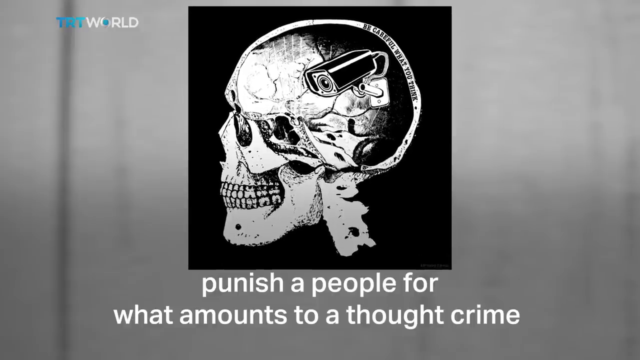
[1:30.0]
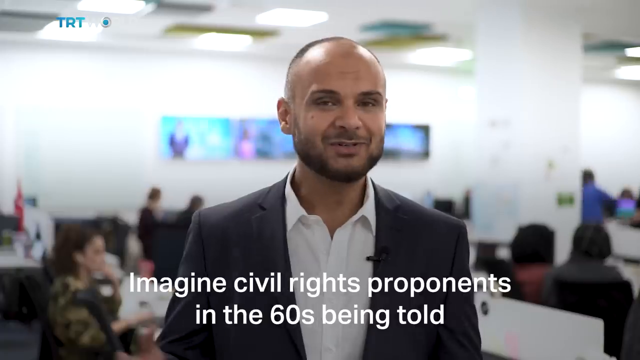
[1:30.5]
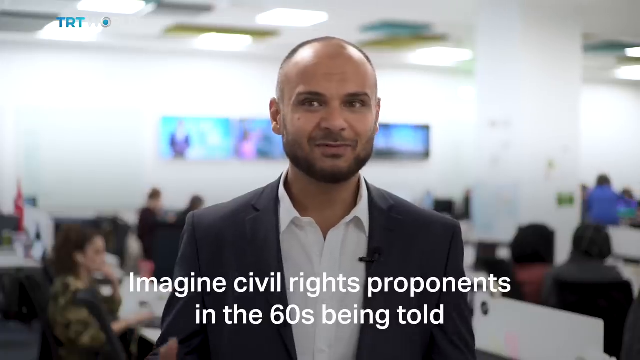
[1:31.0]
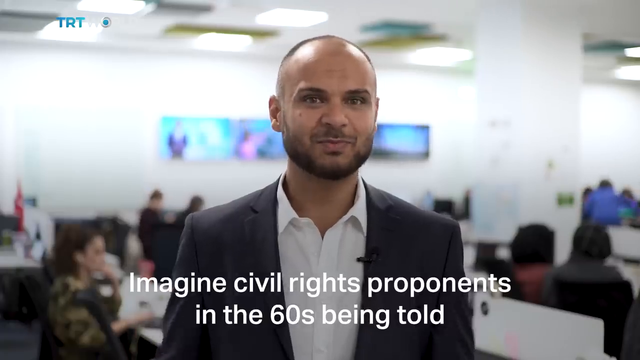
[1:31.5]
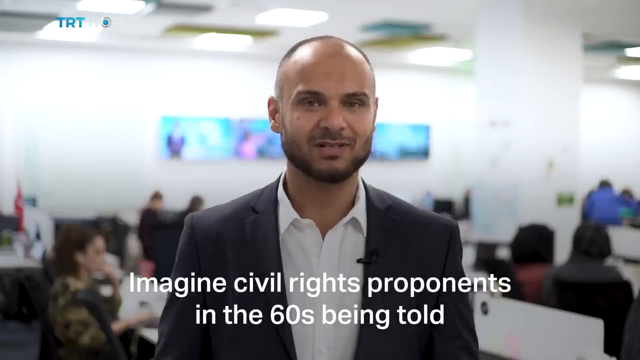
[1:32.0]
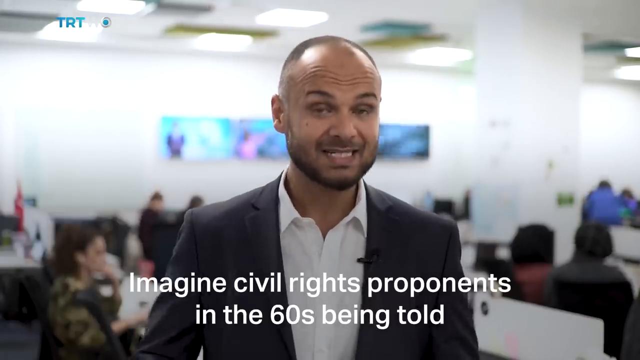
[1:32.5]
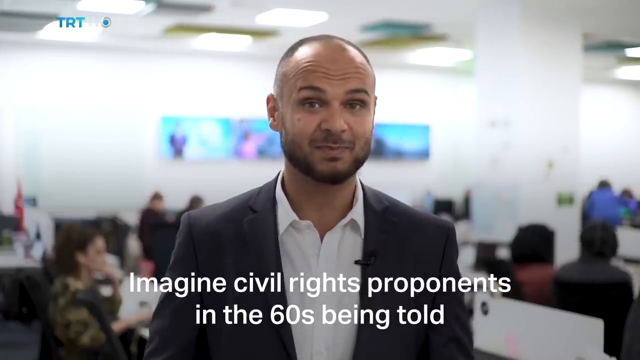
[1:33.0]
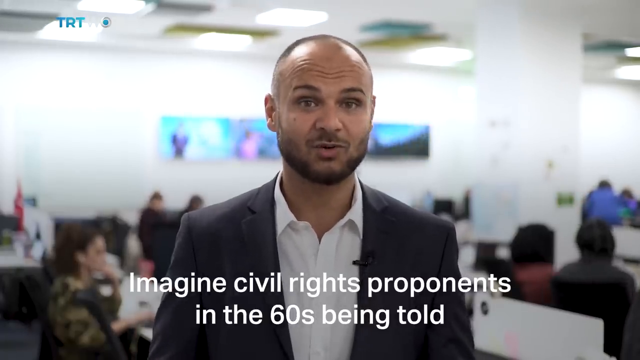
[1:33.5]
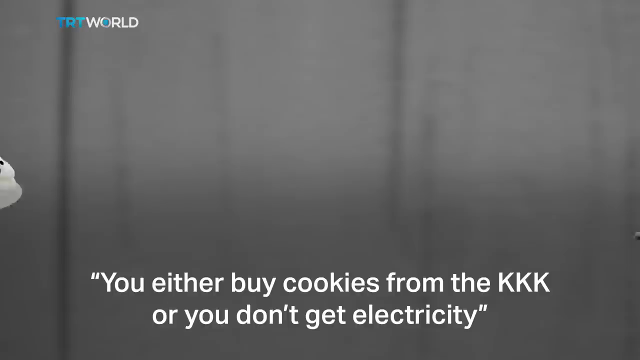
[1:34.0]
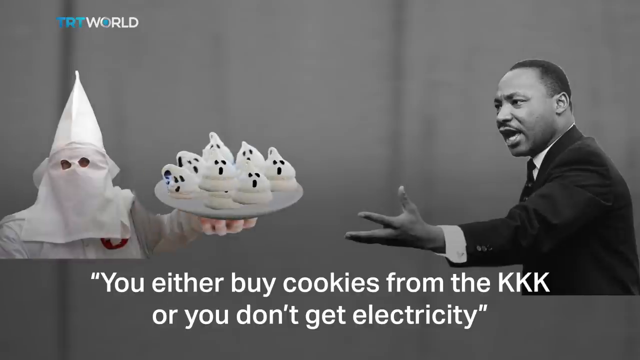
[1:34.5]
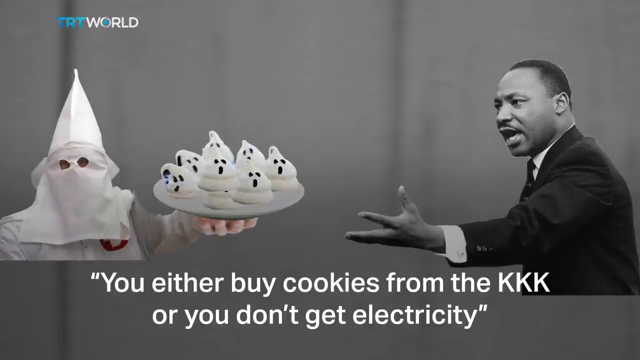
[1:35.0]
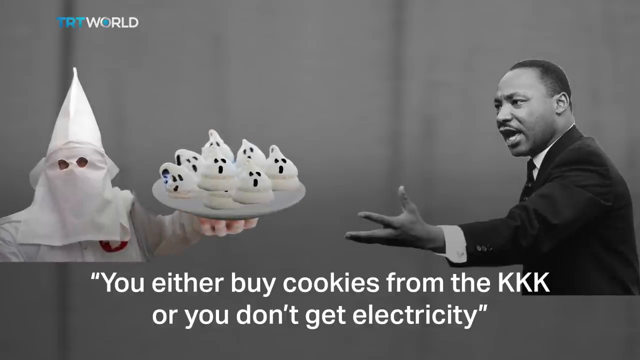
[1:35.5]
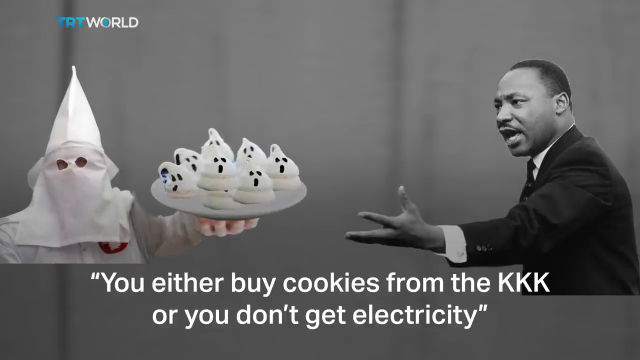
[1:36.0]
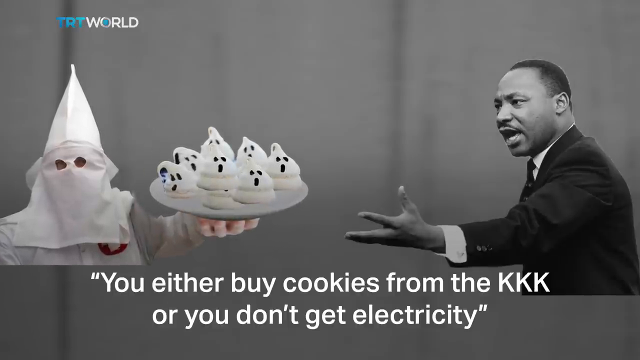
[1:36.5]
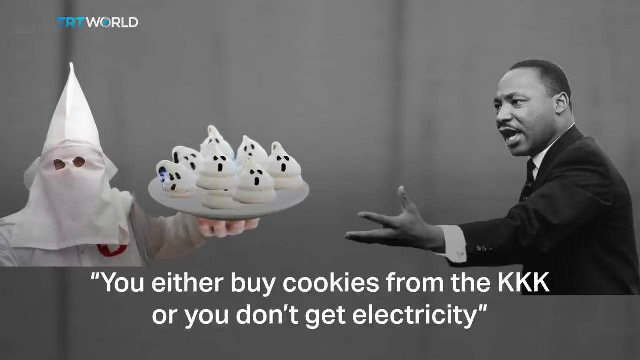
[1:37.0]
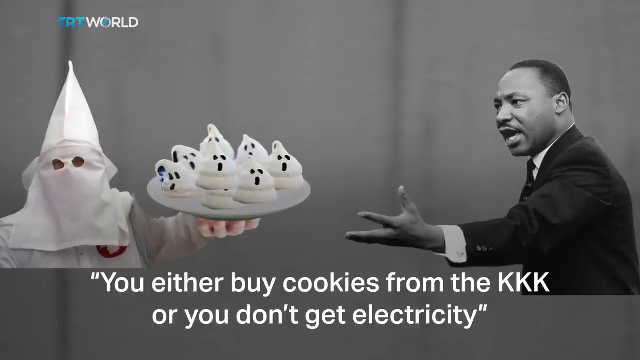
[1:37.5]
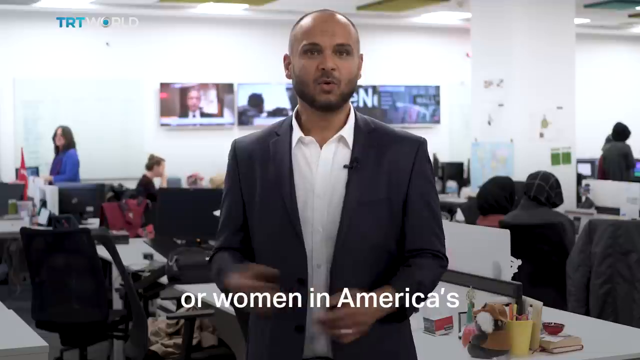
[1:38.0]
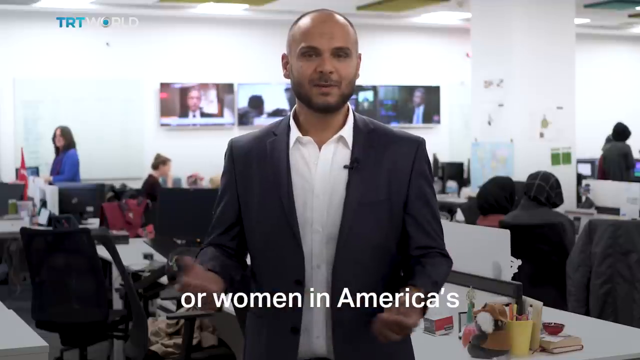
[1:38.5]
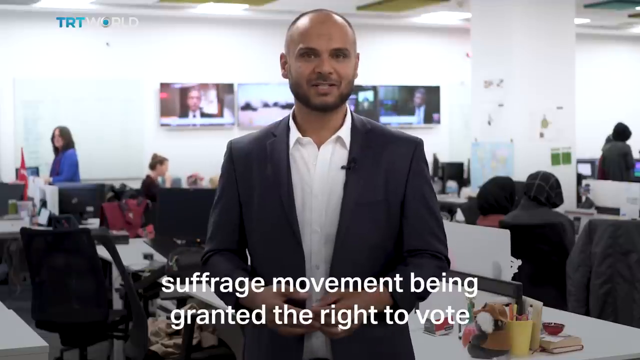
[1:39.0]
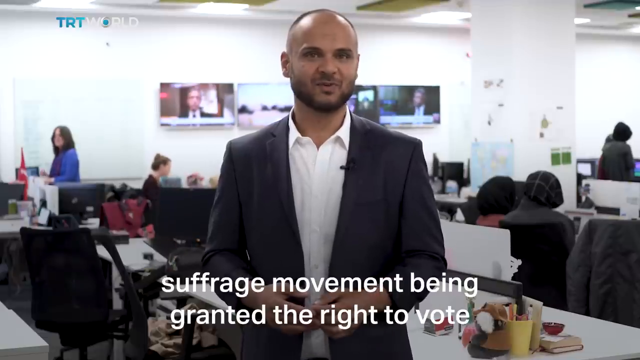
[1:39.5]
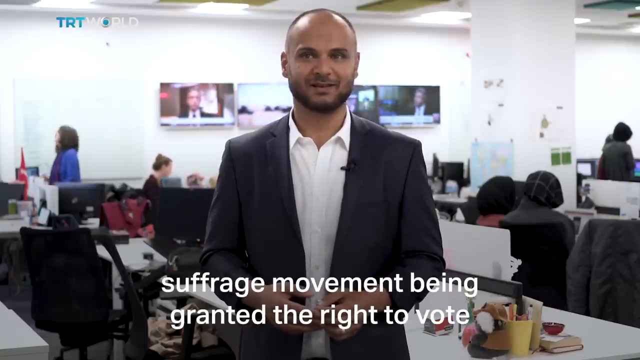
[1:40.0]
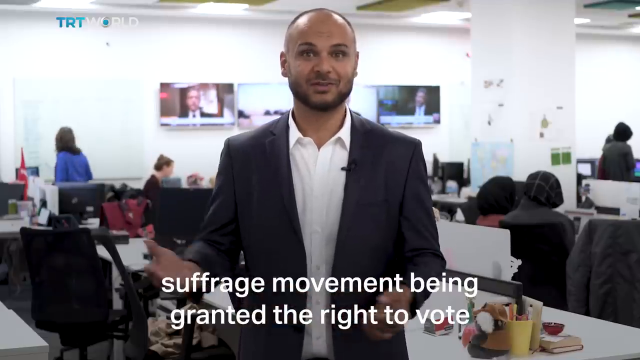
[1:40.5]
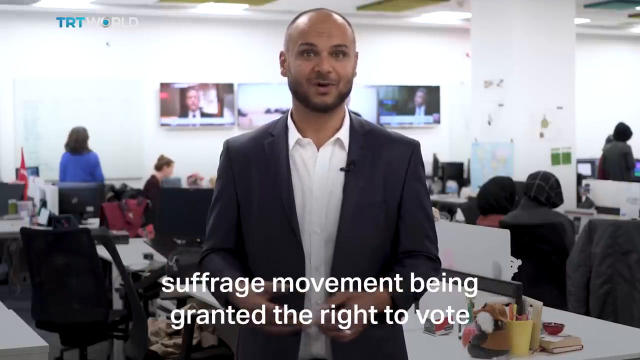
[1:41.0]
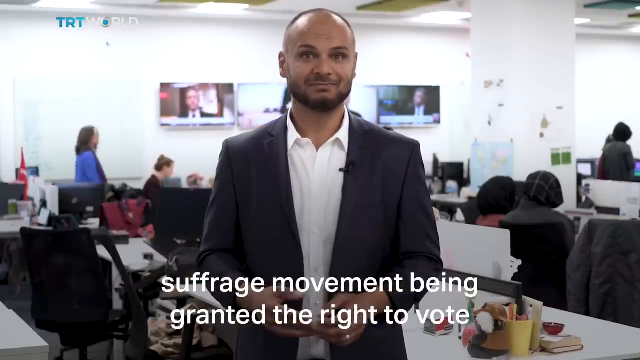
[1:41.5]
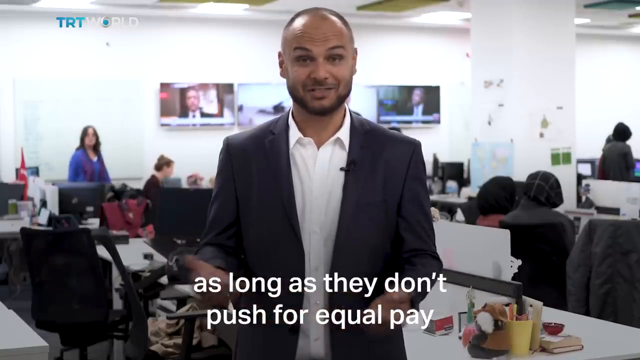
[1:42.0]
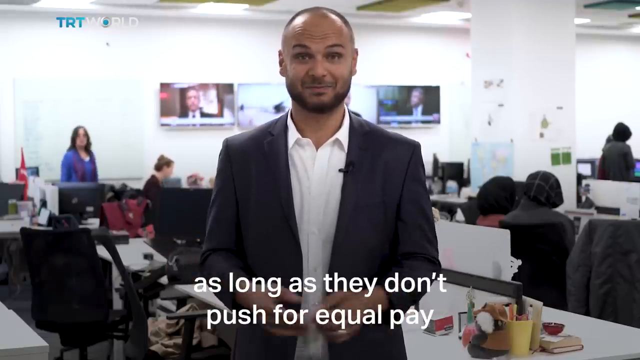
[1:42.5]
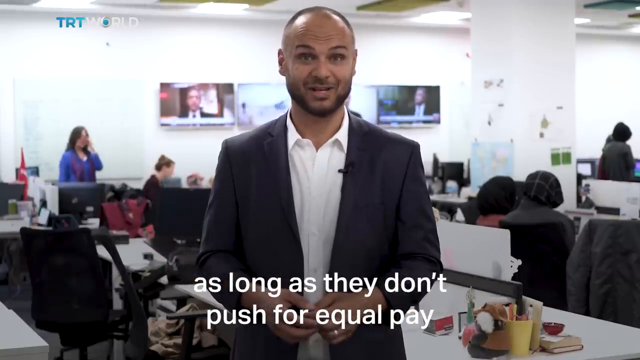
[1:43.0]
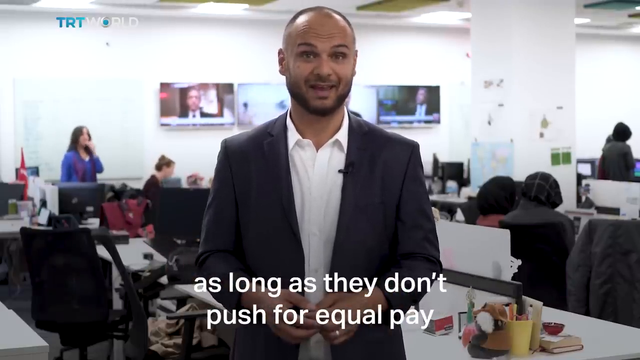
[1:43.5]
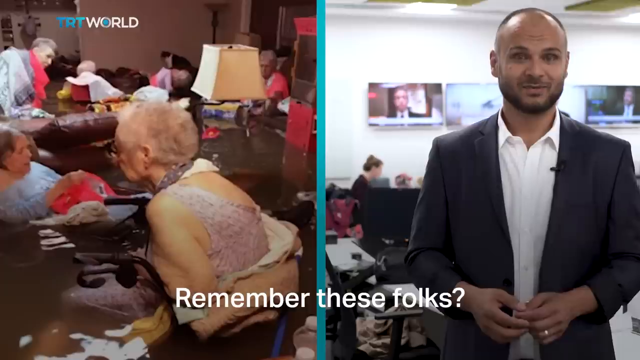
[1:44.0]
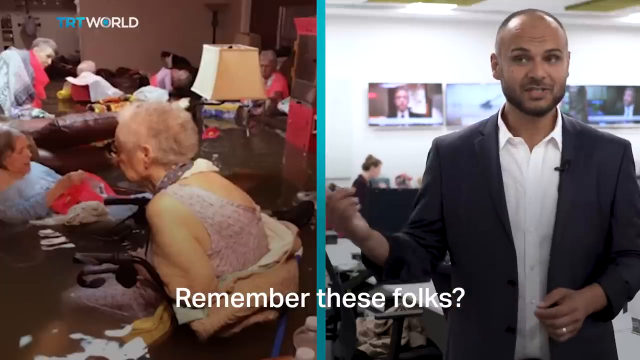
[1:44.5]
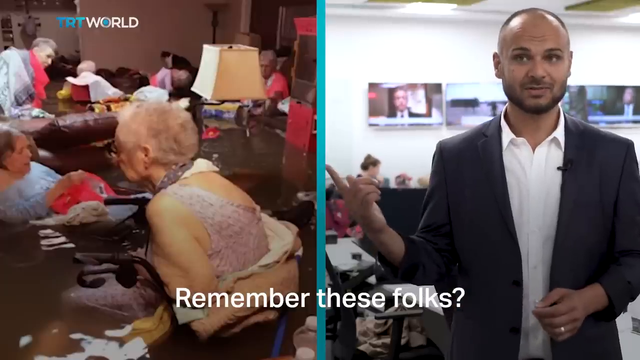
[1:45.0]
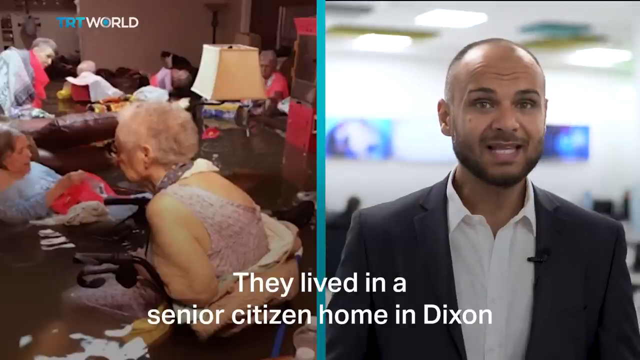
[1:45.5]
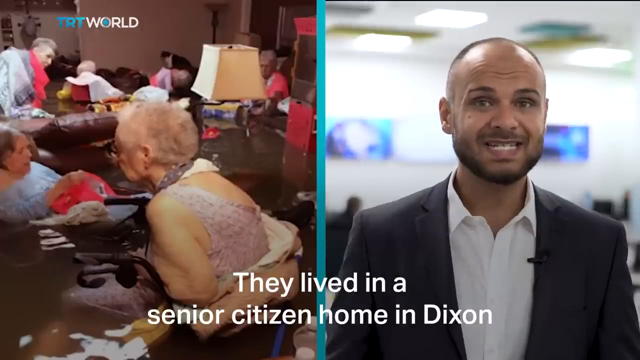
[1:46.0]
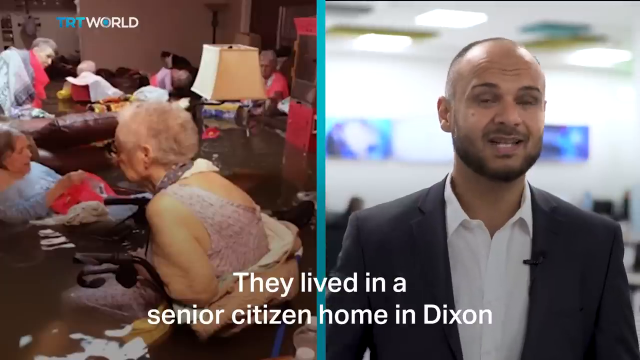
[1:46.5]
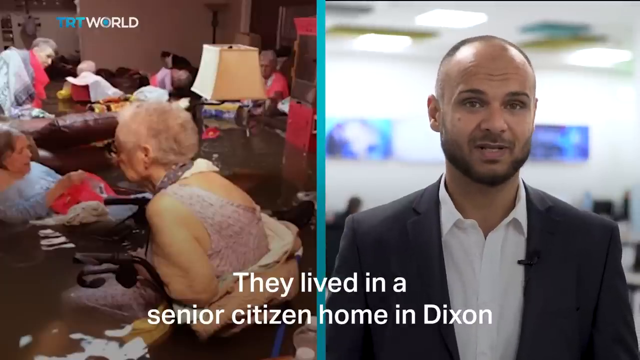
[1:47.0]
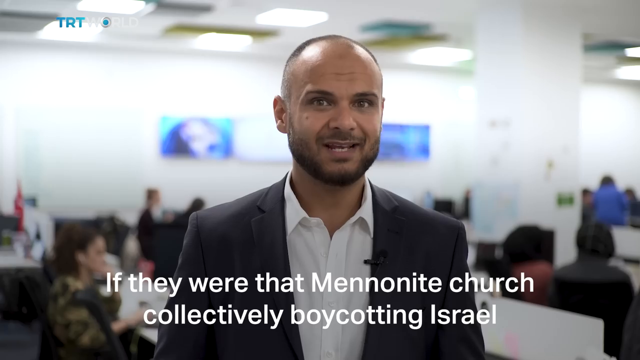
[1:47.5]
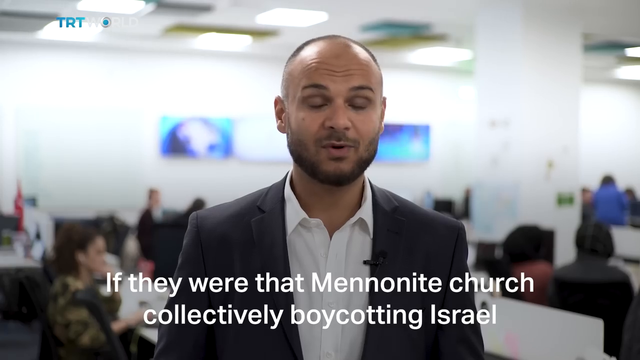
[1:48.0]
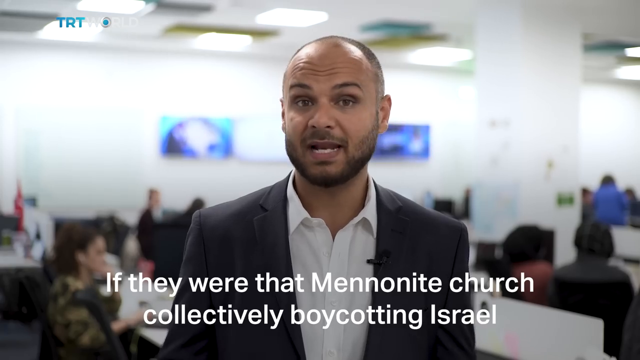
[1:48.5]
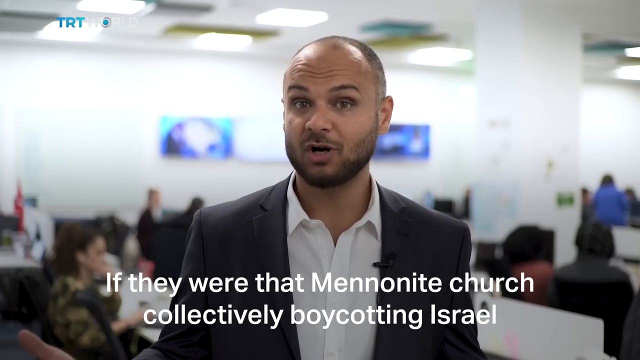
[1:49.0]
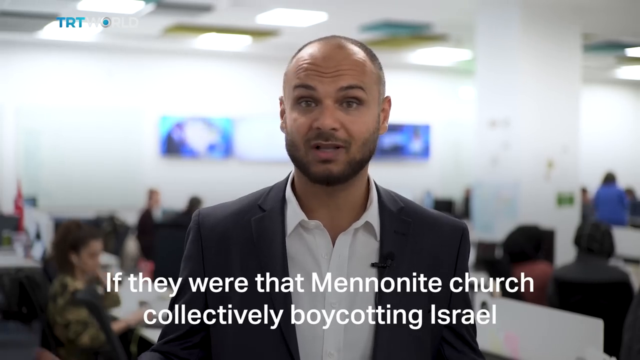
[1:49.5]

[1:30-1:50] The message continues: "Imagine civil rights proponents in the 60s being told you either buy cookies from the KKK or you don't get electricity." A photo shows a KKK member holding out cookies to a very famous civil rights movement actor, who is also stretching his hands toward the KKK member. The message goes on: "Or women in America's suffrage movement being granted the right to vote as long as they don't push for equal pay. Remember this folks?" A photo shows elderly people in a flooded house, with the water near their chests, and the news anchor points toward the image, saying they lived in a senior citizen home in Dixon.